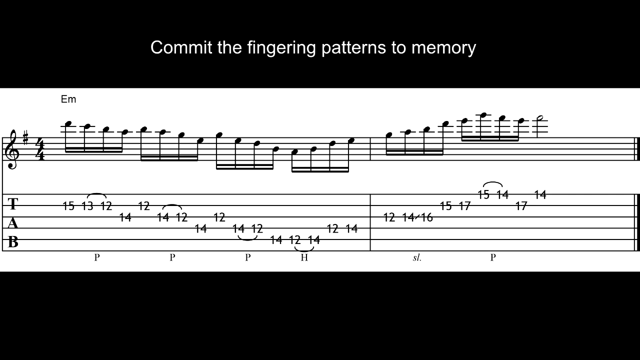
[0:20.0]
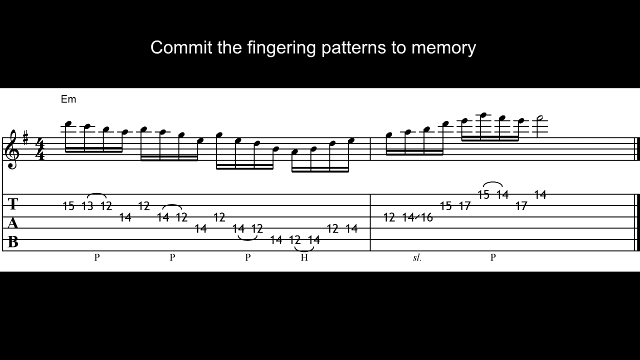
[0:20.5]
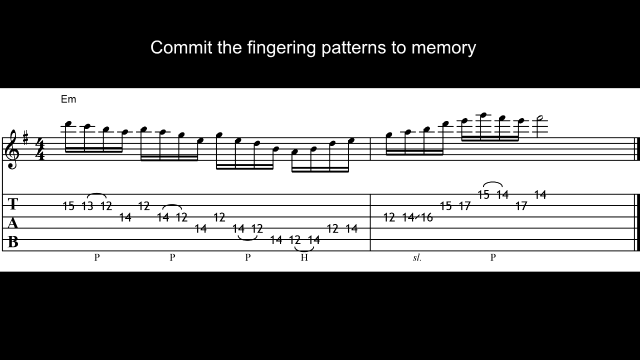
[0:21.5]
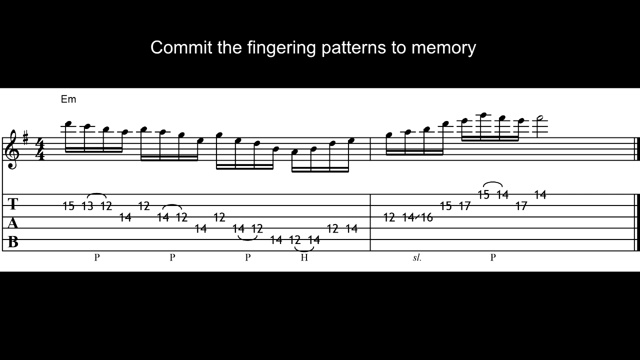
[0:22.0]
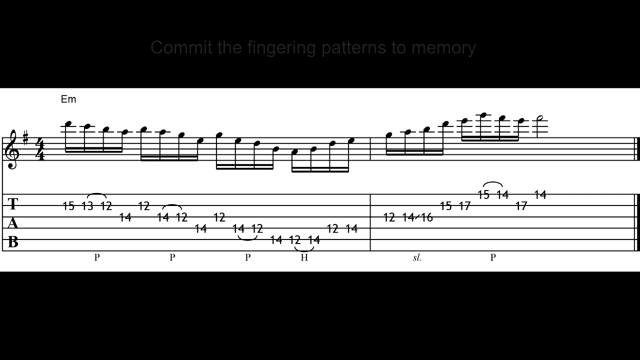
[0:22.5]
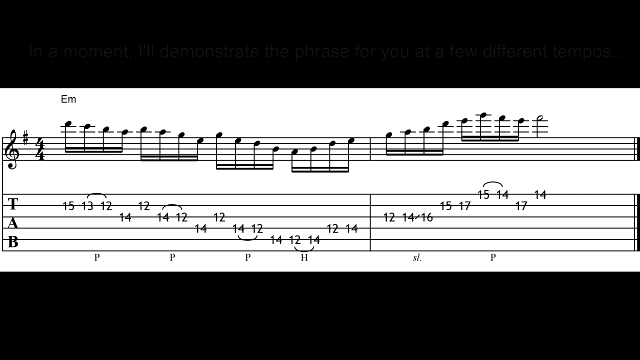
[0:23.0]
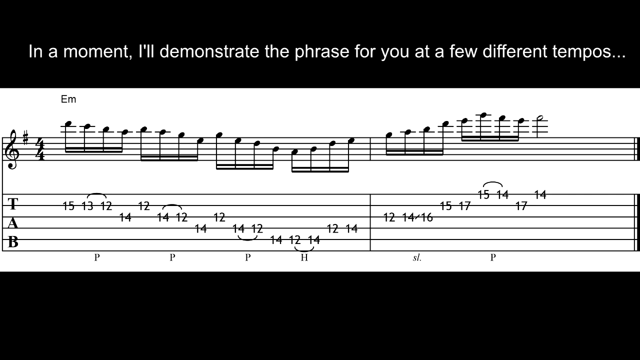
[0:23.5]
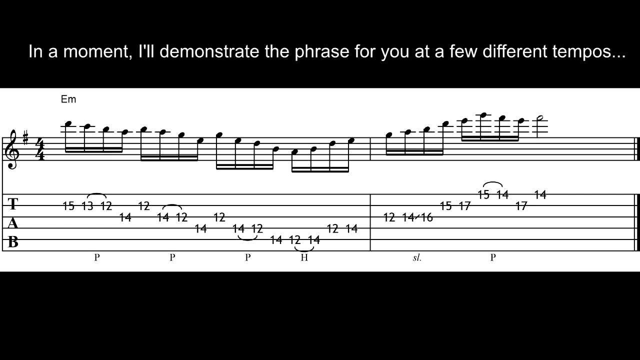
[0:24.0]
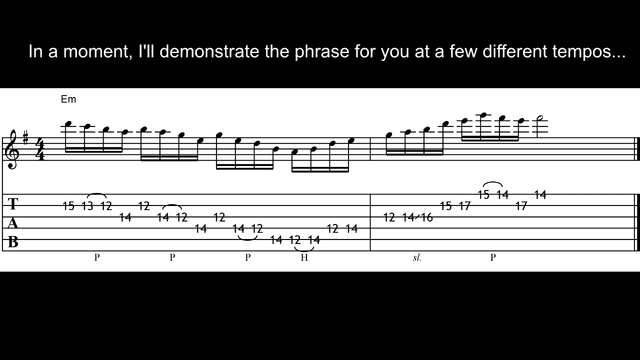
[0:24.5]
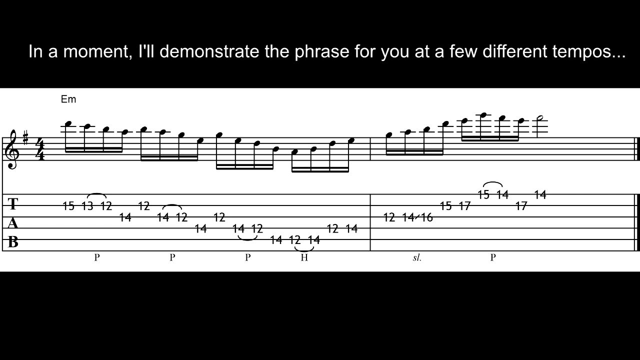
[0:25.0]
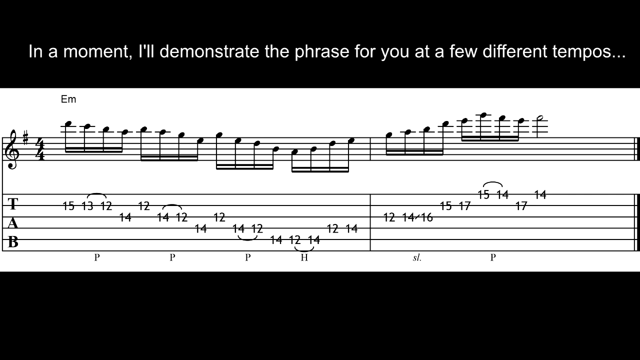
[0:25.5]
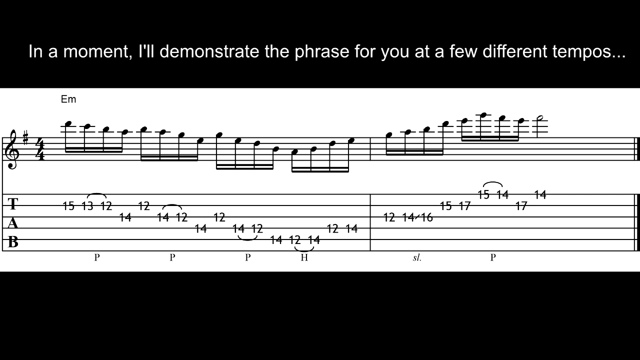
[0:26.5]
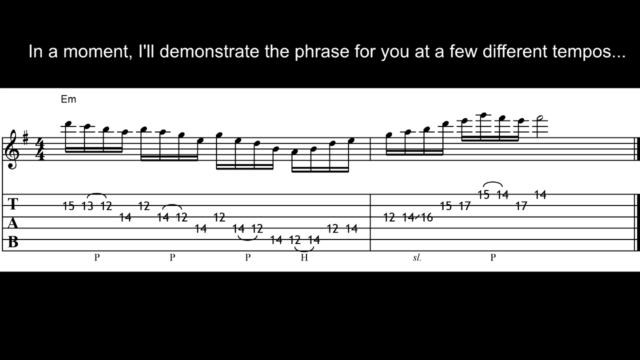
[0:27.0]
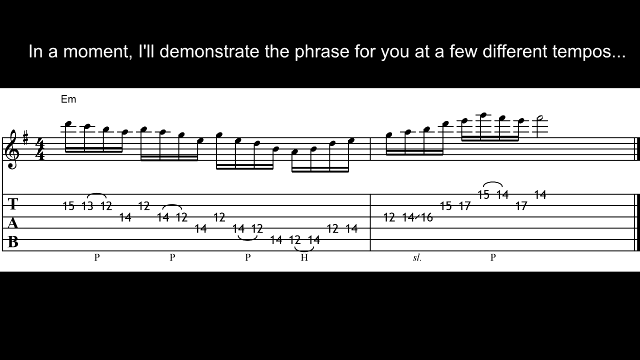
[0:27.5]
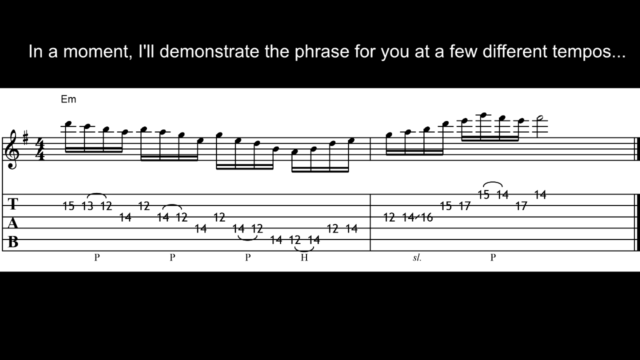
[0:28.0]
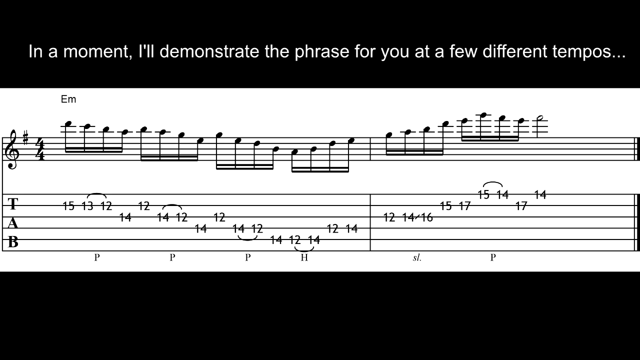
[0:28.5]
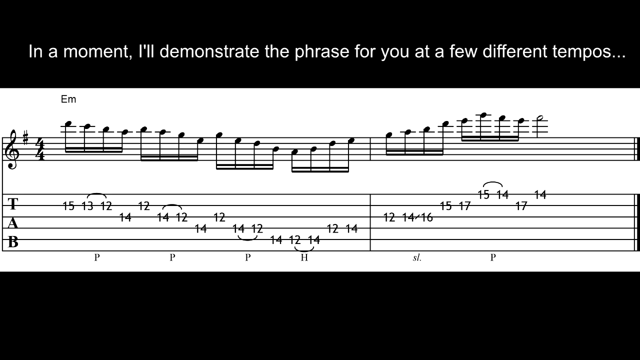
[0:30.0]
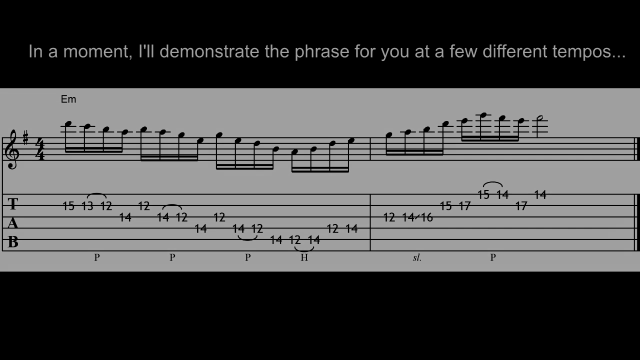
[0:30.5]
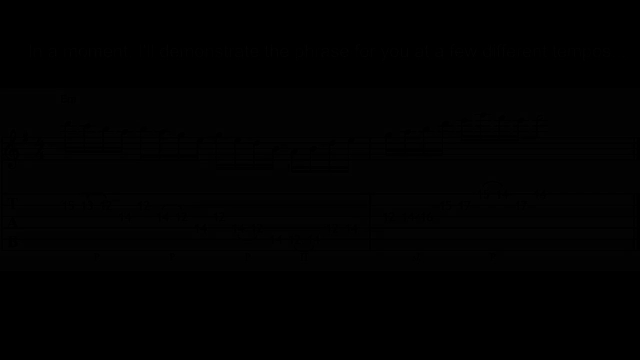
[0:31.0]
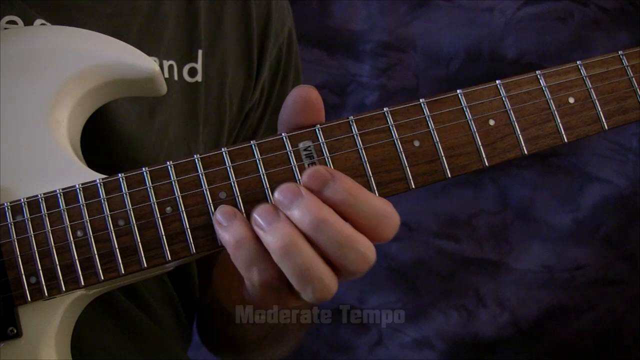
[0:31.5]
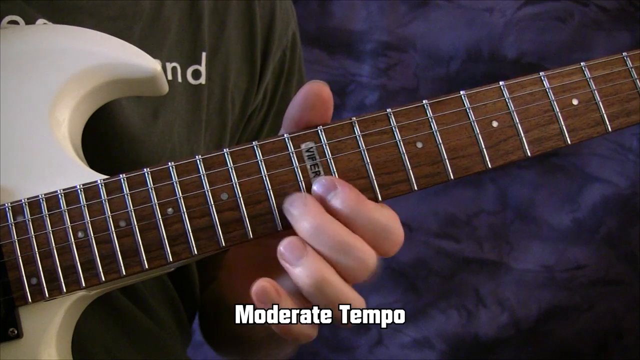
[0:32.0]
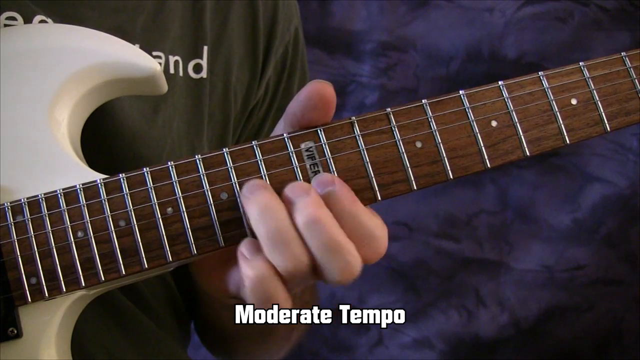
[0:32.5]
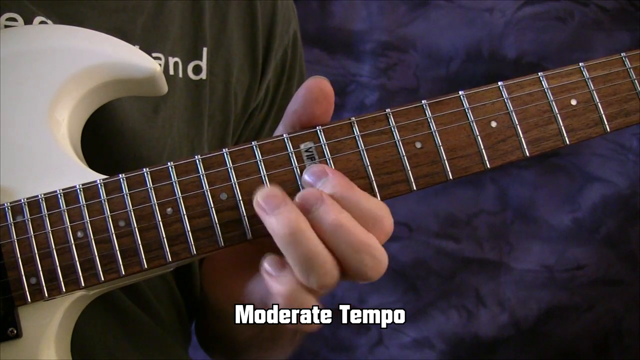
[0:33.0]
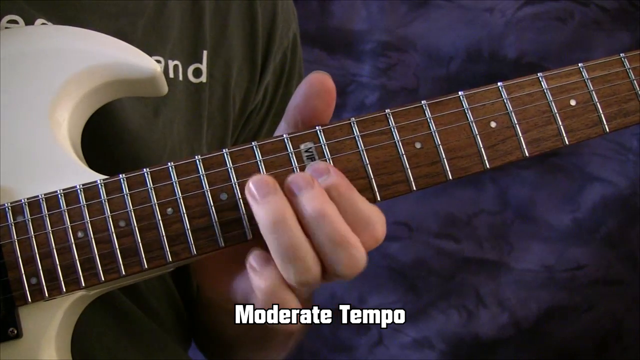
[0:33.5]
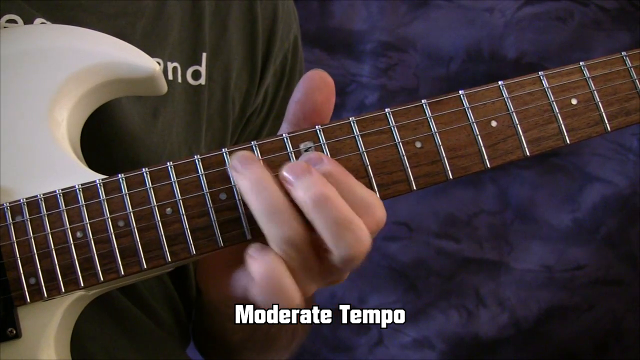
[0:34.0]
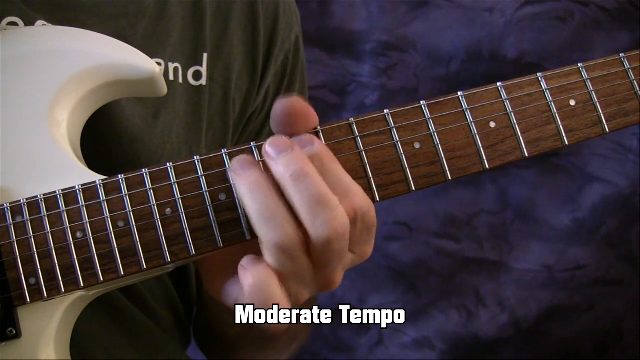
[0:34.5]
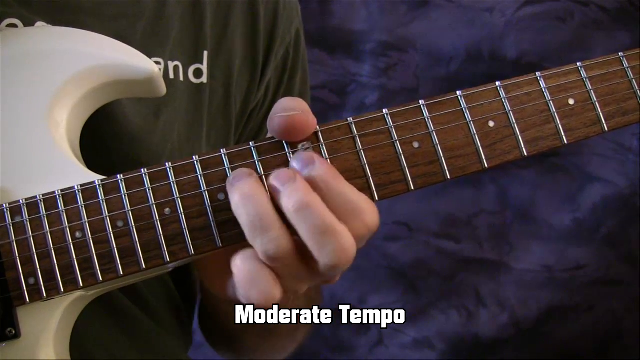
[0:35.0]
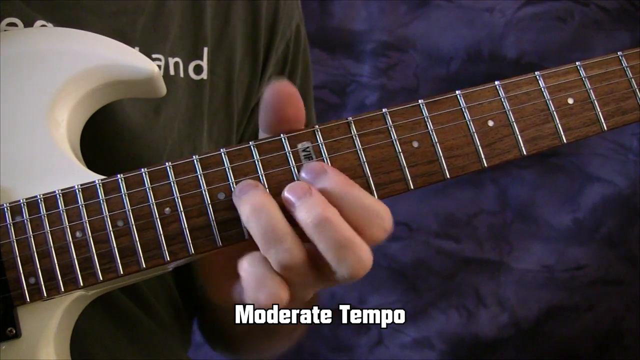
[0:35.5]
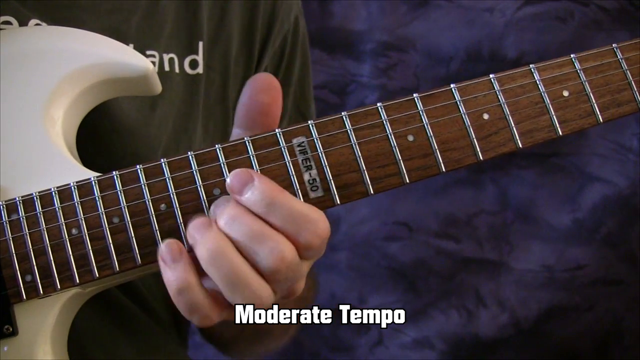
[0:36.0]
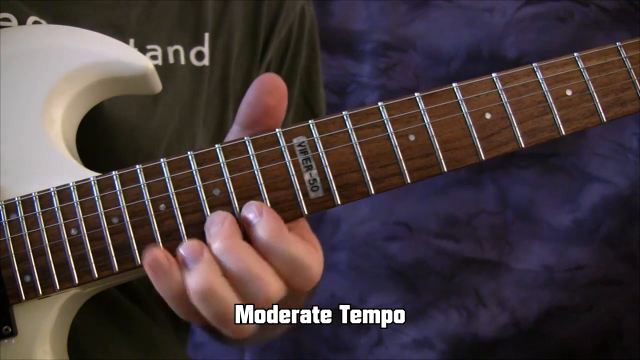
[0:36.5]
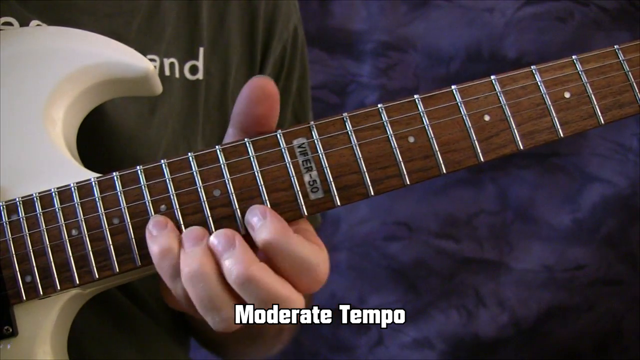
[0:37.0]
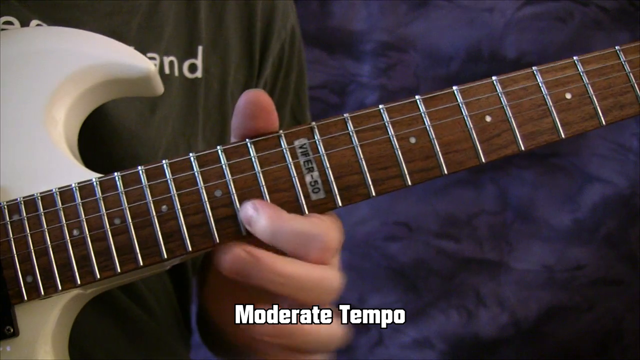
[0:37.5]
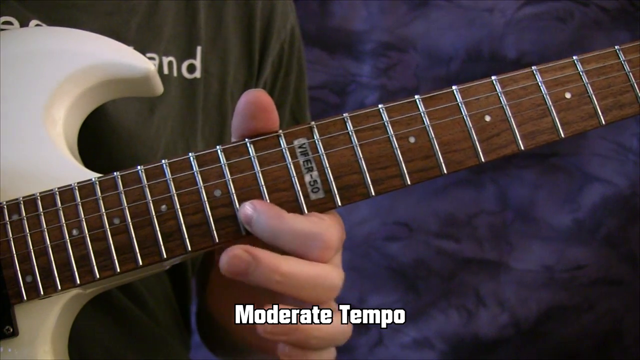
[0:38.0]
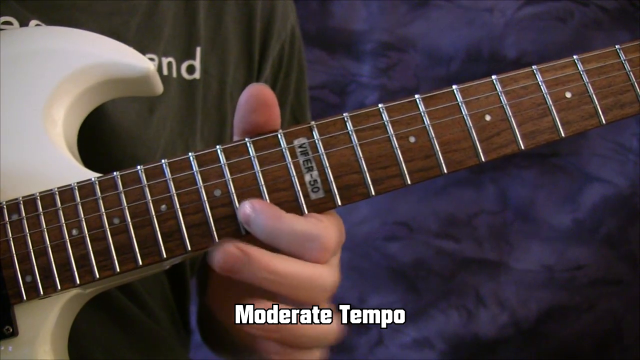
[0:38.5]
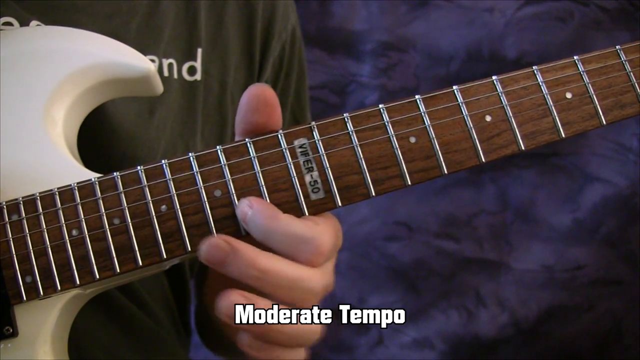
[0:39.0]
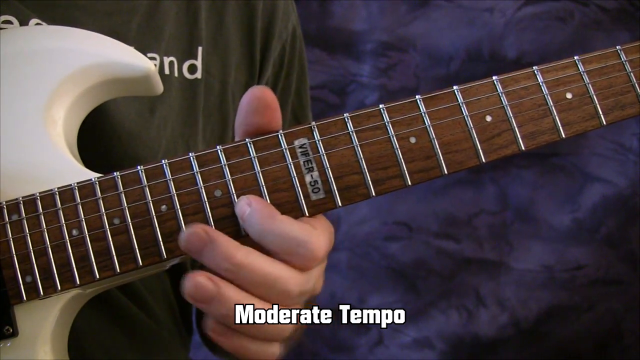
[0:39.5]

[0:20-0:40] The music sheet remains on screen with "commit the fingering patterns to memory" at the top, which then reads "in a moment I'll demonstrate the phrase for you at a few different tempos." The video cuts to a person, possibly male or female, holding a guitar. The person wears a green shirt with white wording on it that cannot be read. The guitar looks like it may be an electric guitar, white with a brown part where the strings are. The person holds it against their body with the left hand up top on the strings, looking about to play, in front of a purple and dark mesh background. The person starts playing: the left hand is at the top, the thumb over the back of the strings, and three fingers, the pointer, middle and index, play, with the thumb and then the pinky popping in.